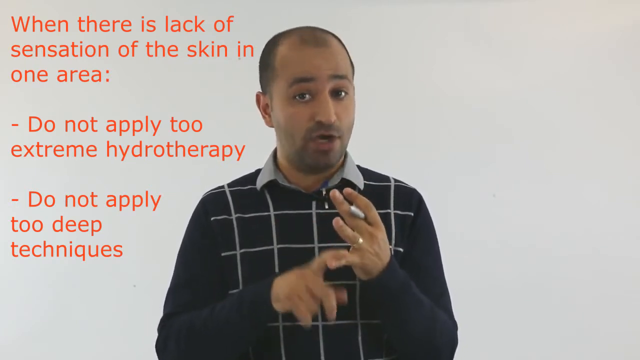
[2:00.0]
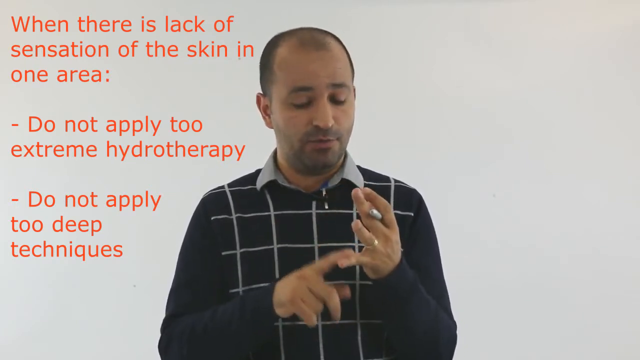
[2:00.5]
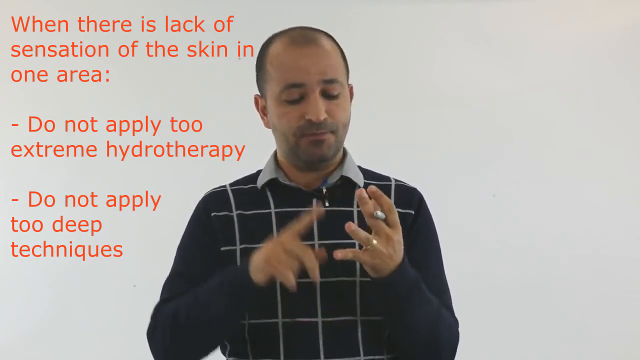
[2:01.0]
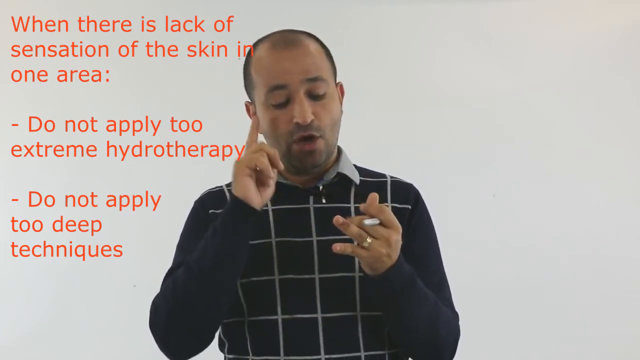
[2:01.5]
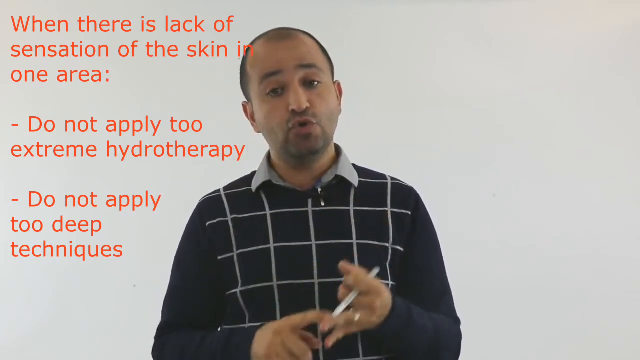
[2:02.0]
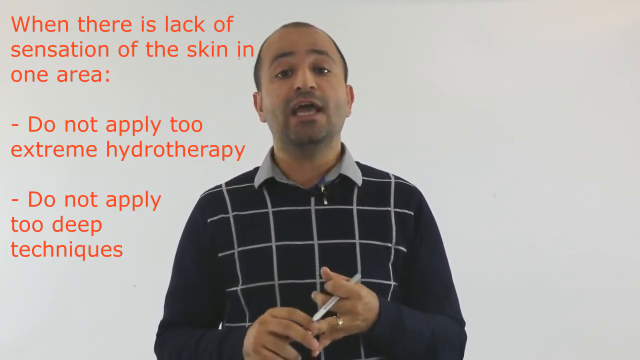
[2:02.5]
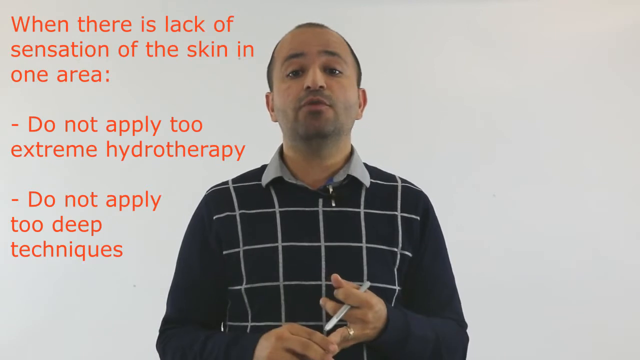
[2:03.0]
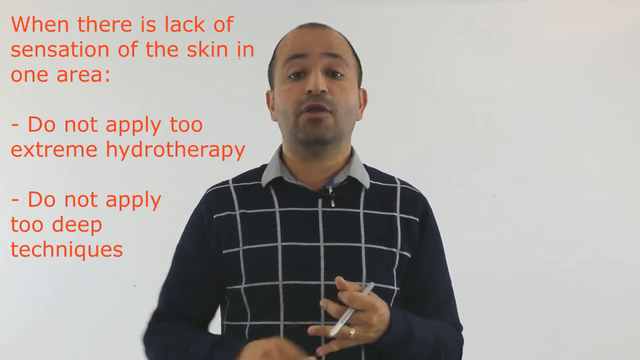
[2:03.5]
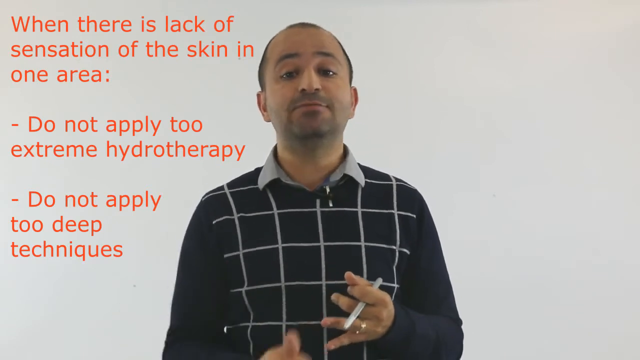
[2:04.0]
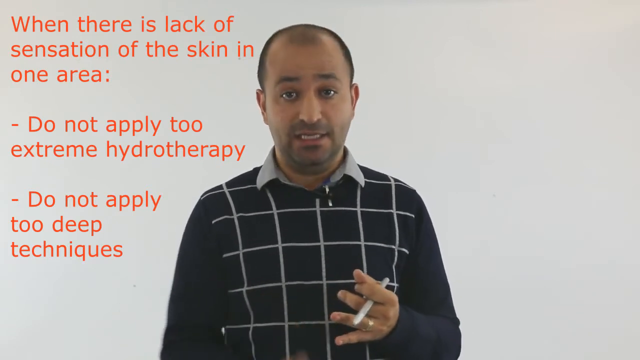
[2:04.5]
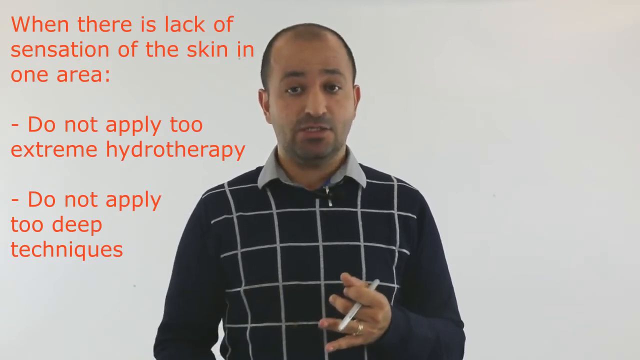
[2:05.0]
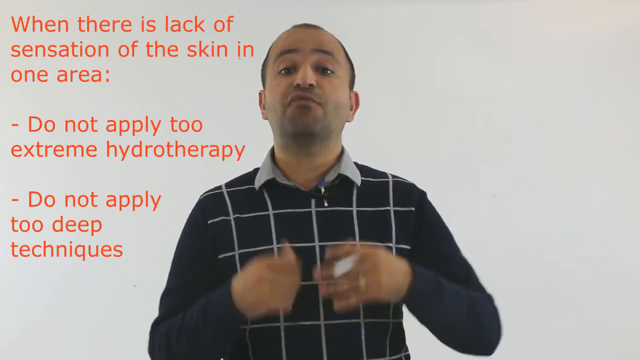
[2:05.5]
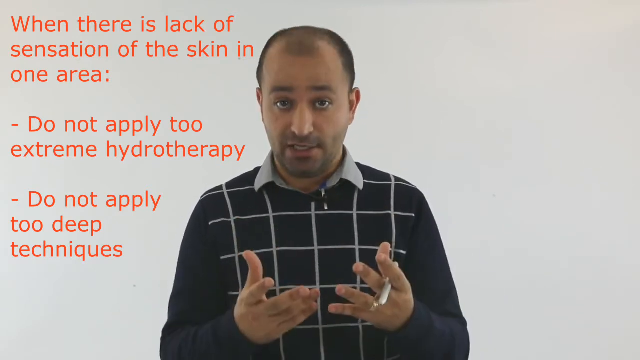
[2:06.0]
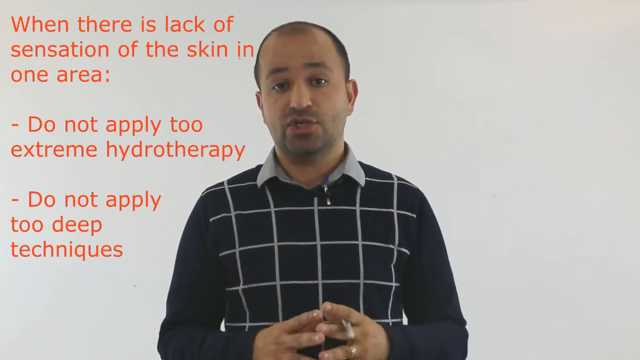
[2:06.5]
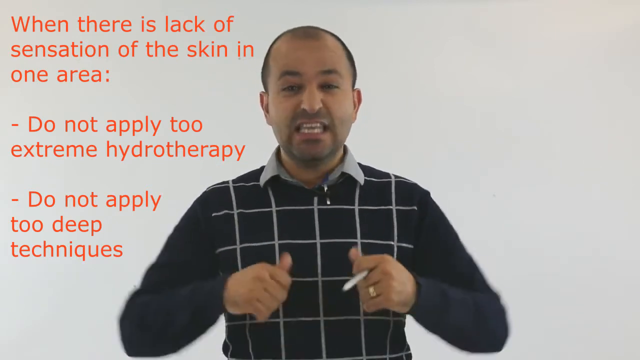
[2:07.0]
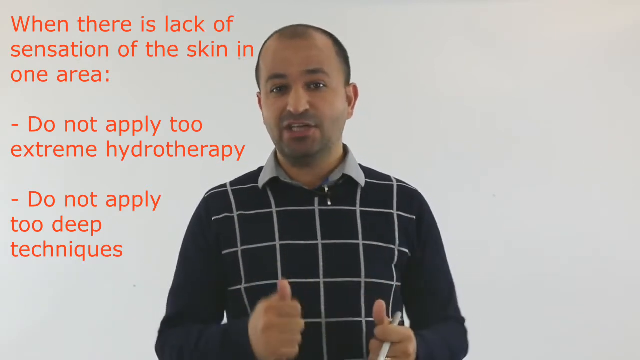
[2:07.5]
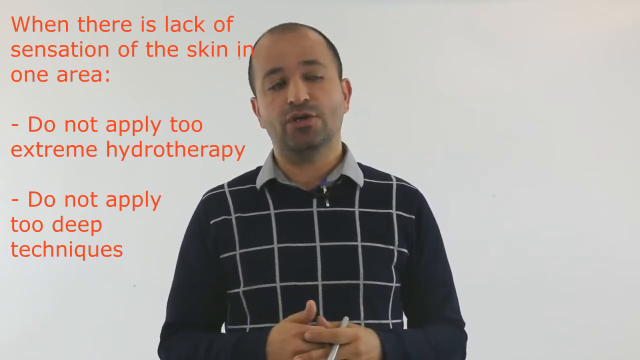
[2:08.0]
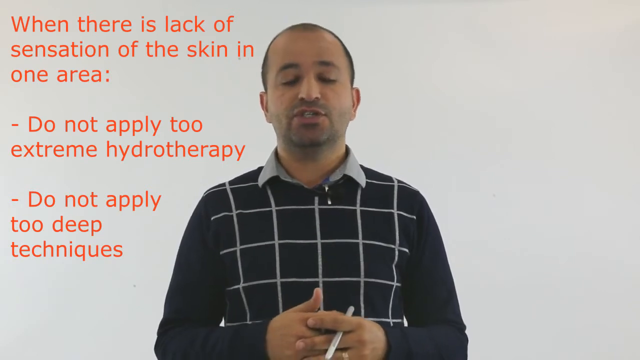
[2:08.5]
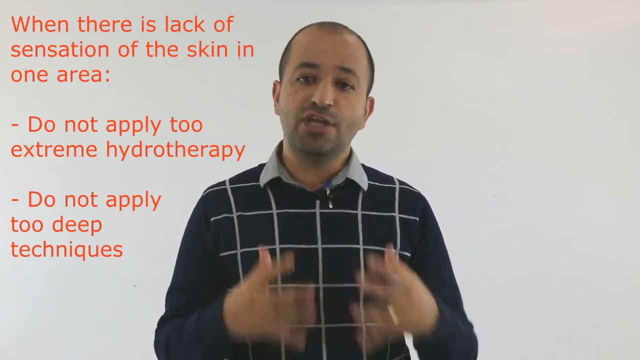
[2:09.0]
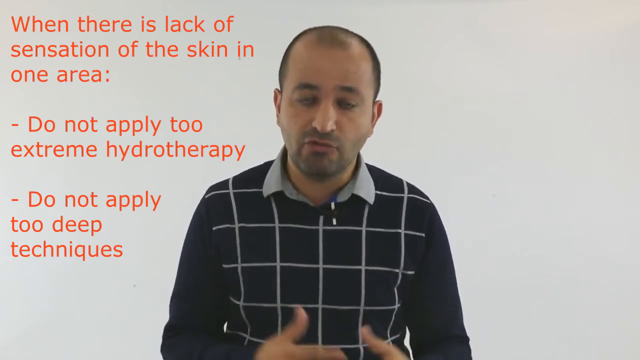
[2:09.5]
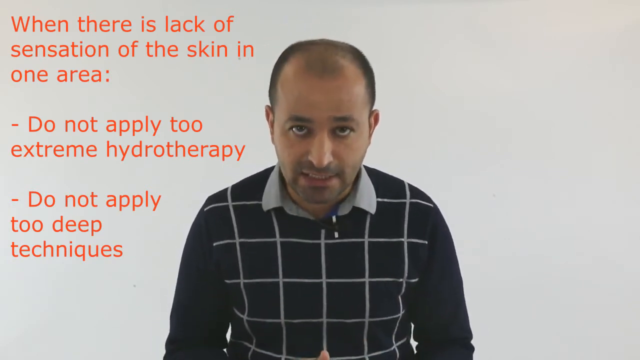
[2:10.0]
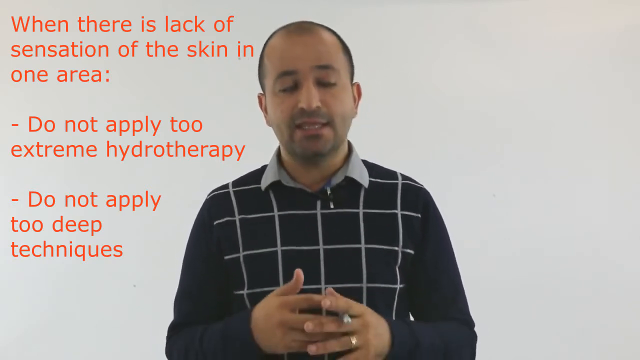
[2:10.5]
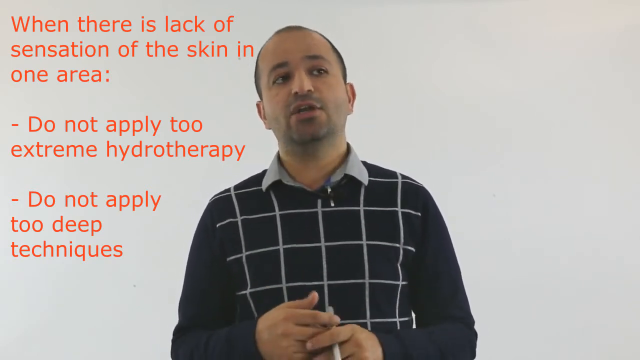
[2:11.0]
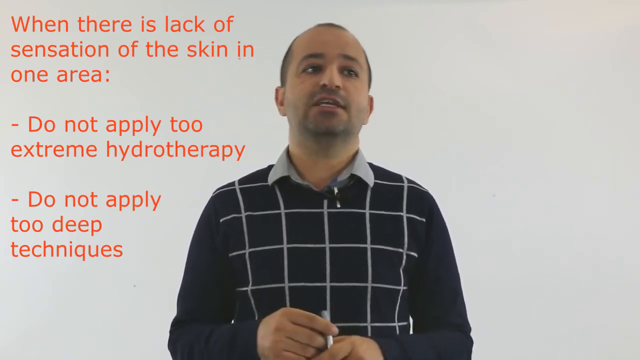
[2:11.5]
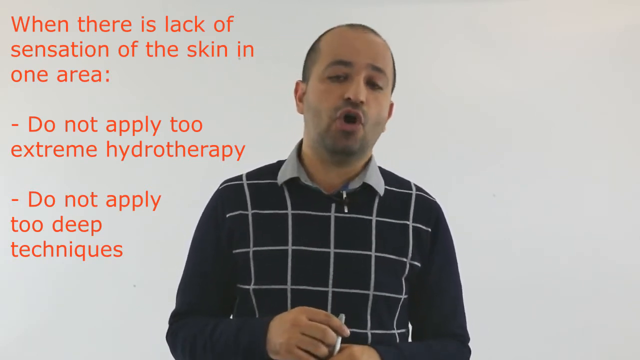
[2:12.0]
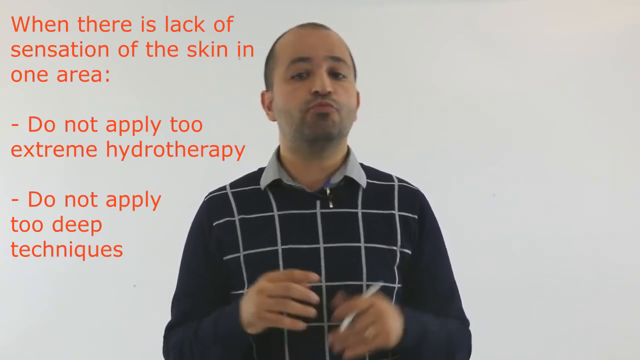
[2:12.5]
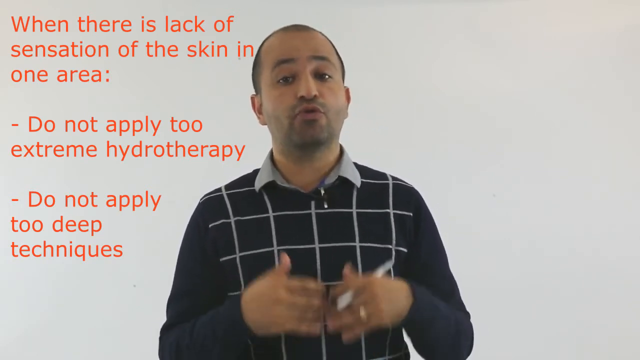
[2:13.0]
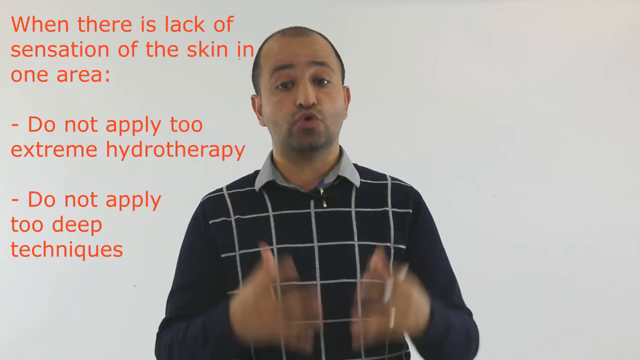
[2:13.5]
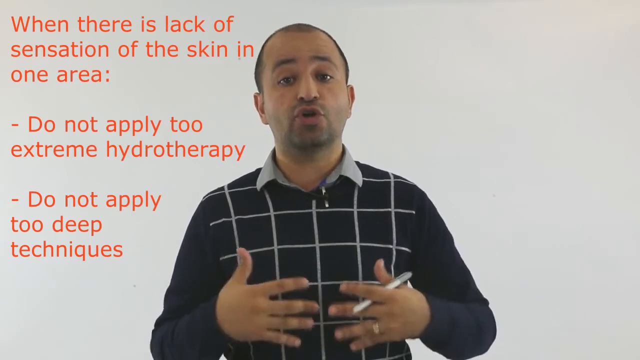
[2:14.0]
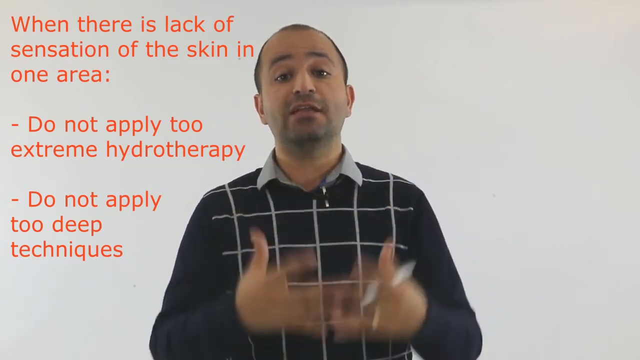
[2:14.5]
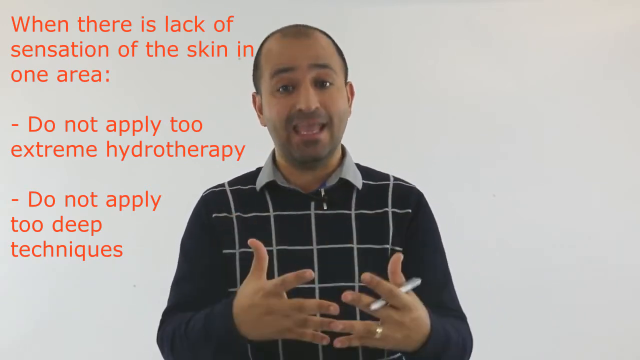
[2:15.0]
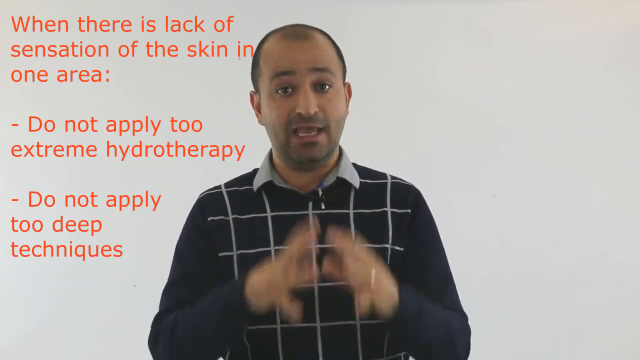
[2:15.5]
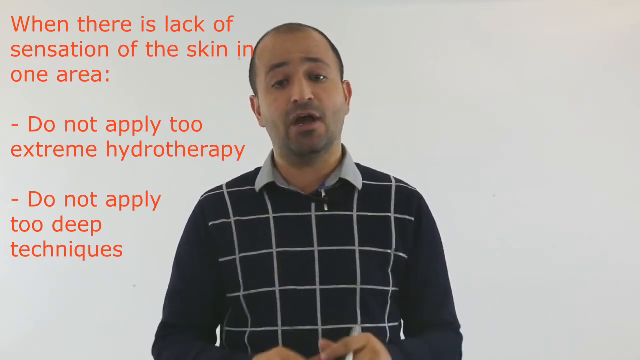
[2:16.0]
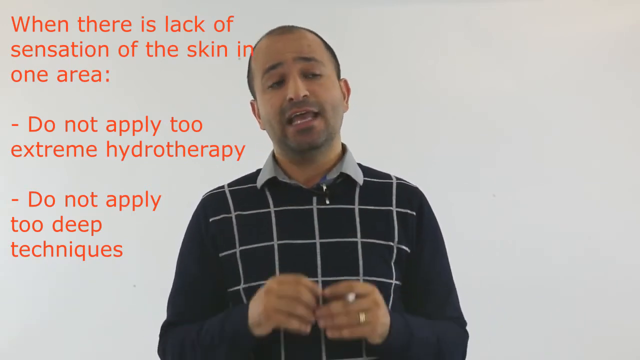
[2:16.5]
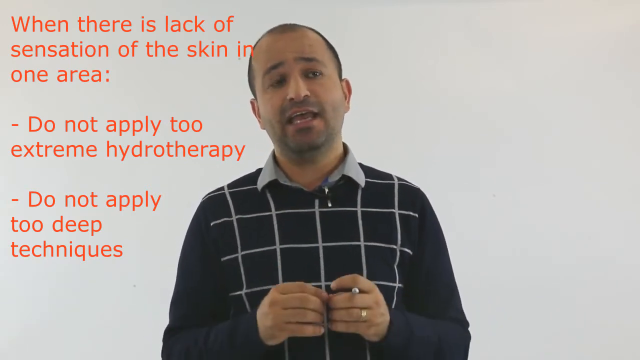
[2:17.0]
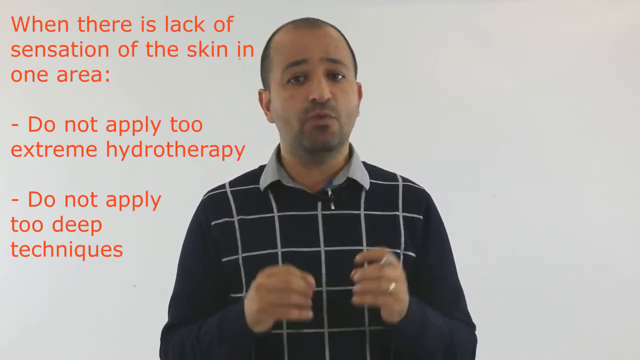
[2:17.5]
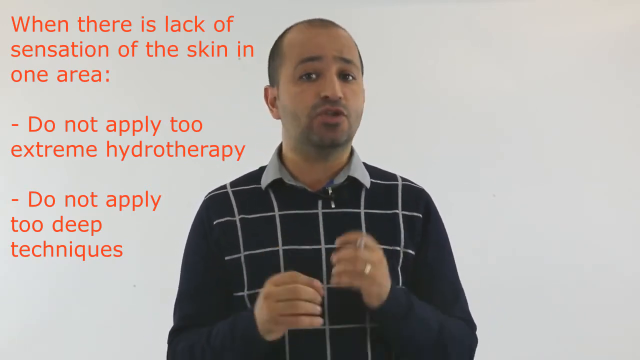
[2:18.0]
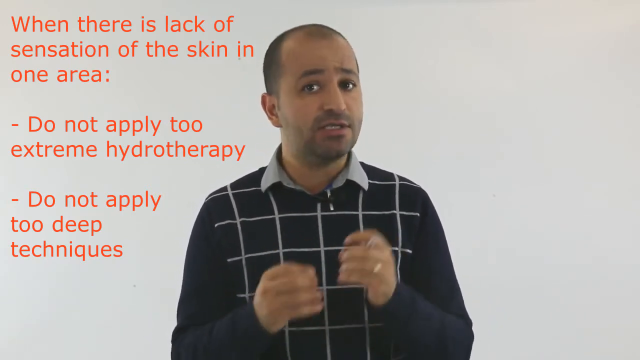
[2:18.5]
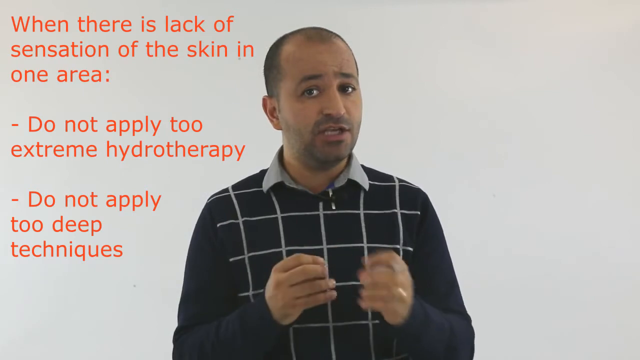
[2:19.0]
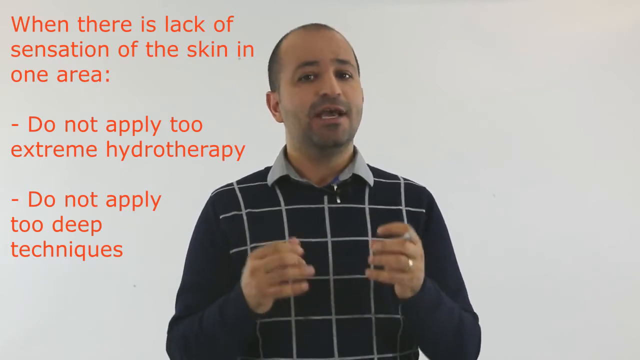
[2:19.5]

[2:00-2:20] The Middle Eastern man faces the camera, looking right at the viewer, with a white background behind him. He wears a black sweater with a gray button-up shirt beneath it, holds a pen in his left hand, and has a wedding ring on his left hand. Text over his right shoulder, on the left side of the screen, reads "when there is a lack of sensation of skin in one area do not apply too extreme hydrotherapy. Do not apply too deep technique." He is very animated as he continues talking, apparently about the earlier exam question. No definitive answer to the question appears on screen; the red text is the only context shown.